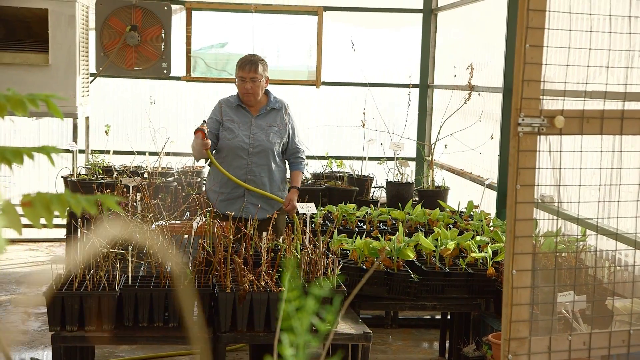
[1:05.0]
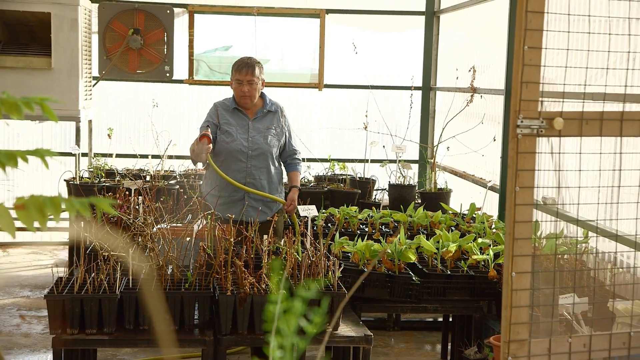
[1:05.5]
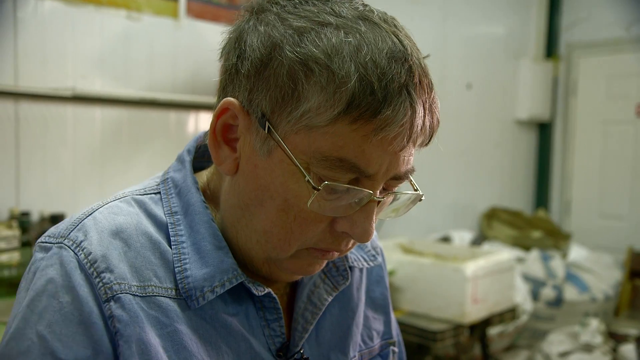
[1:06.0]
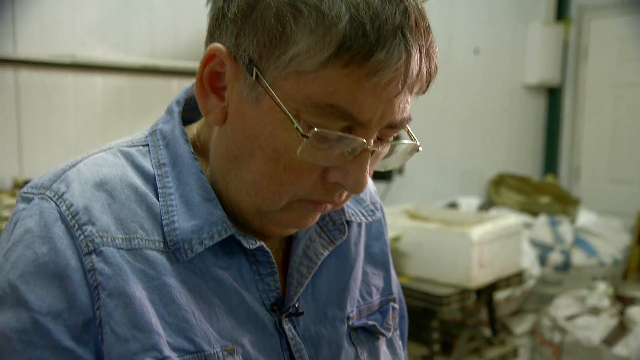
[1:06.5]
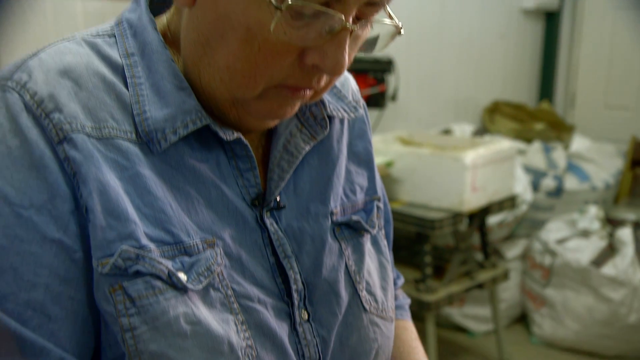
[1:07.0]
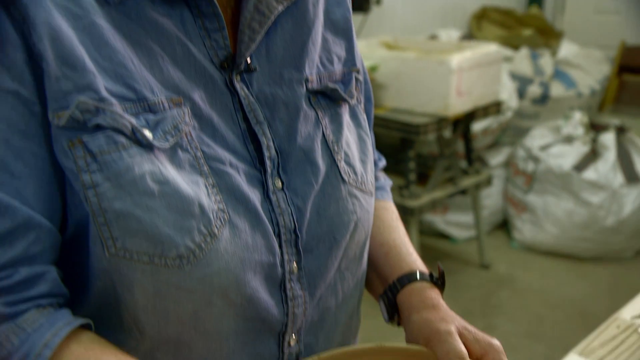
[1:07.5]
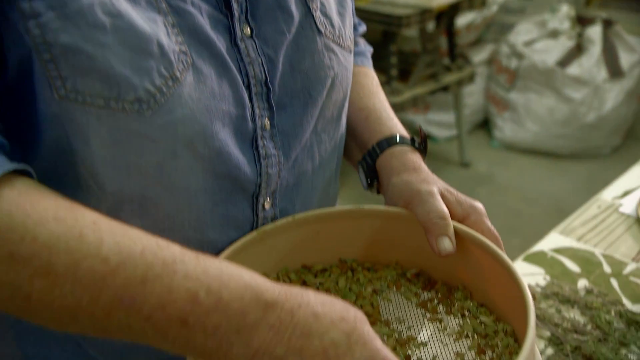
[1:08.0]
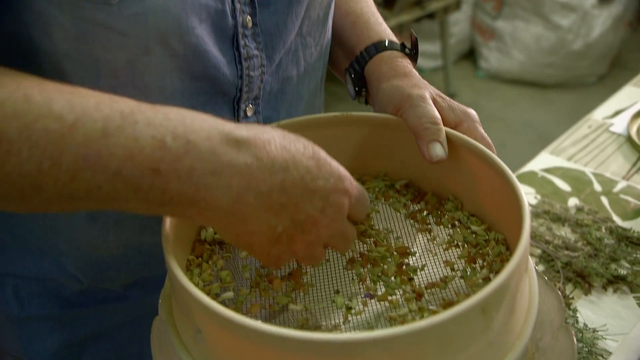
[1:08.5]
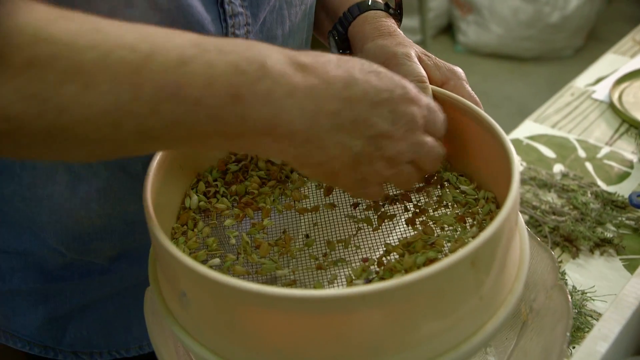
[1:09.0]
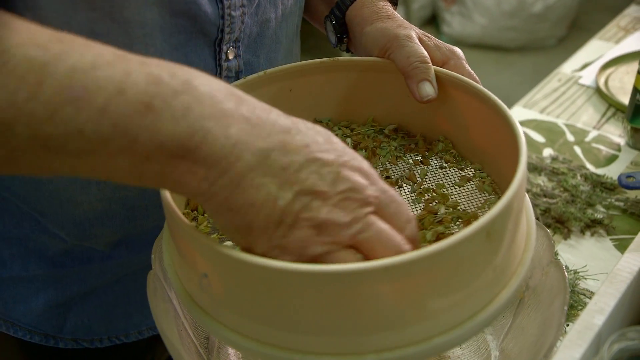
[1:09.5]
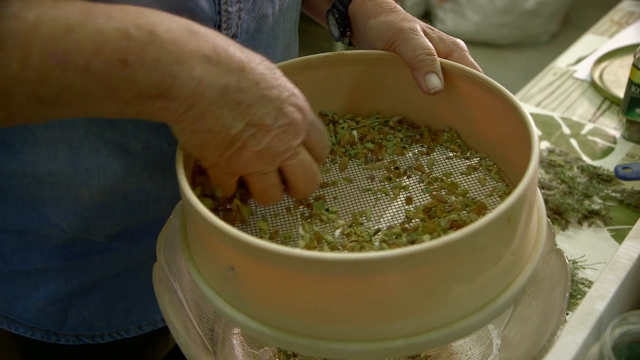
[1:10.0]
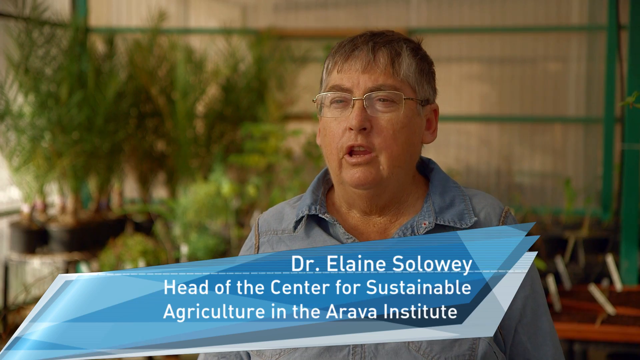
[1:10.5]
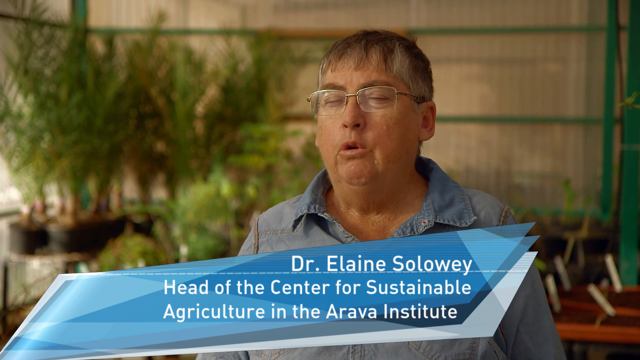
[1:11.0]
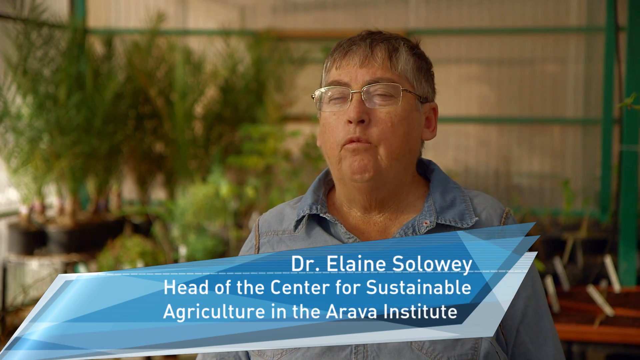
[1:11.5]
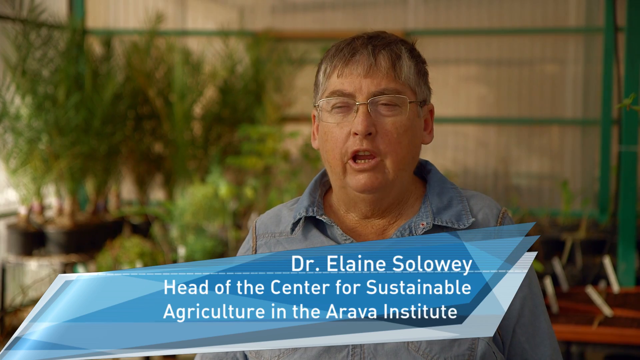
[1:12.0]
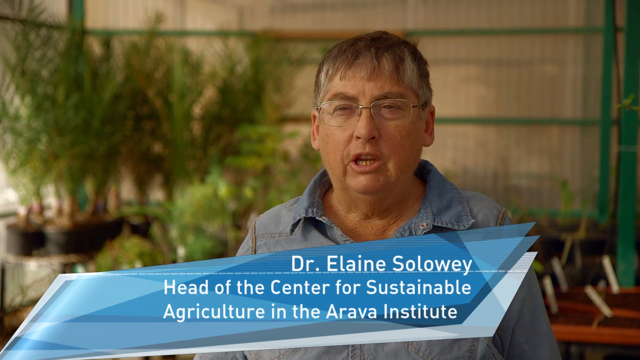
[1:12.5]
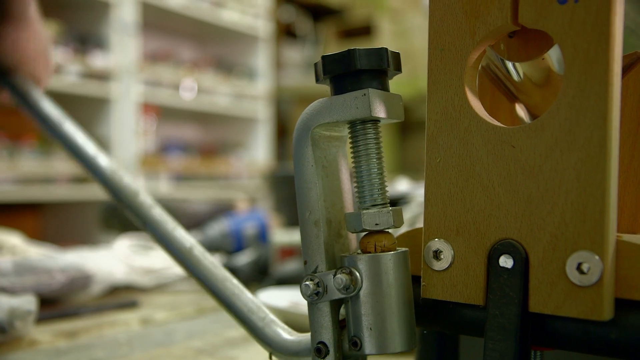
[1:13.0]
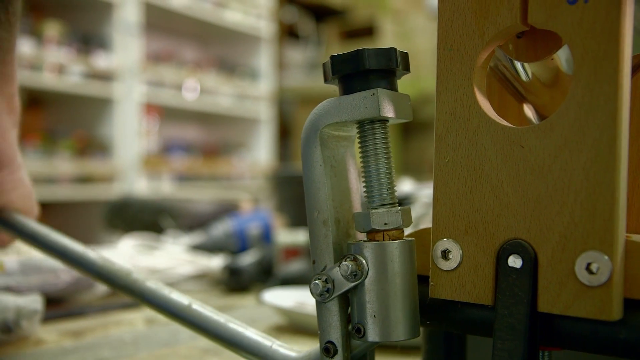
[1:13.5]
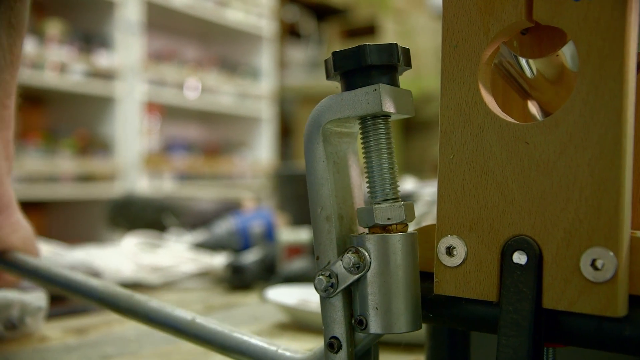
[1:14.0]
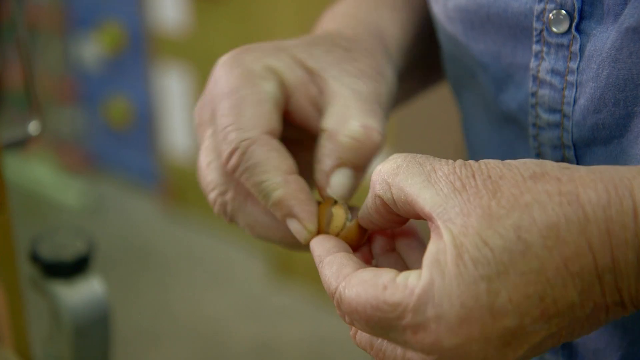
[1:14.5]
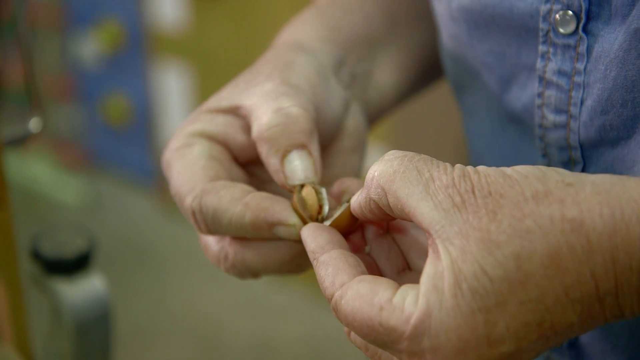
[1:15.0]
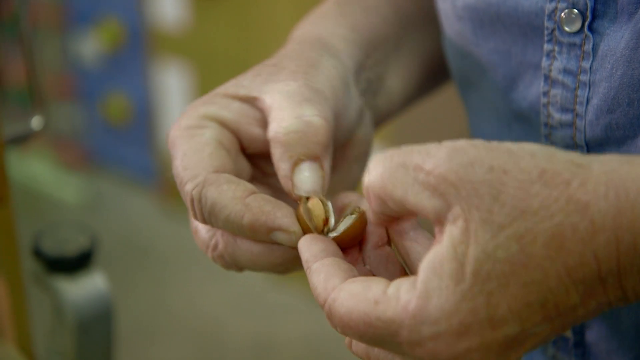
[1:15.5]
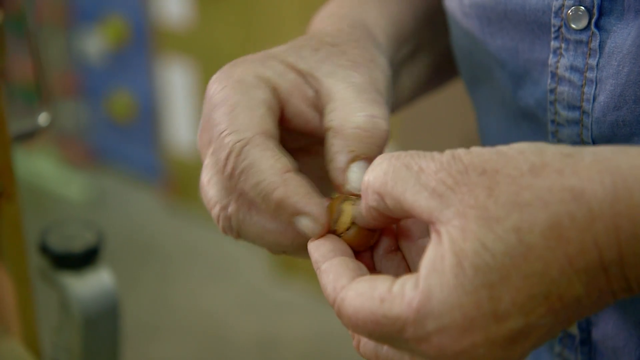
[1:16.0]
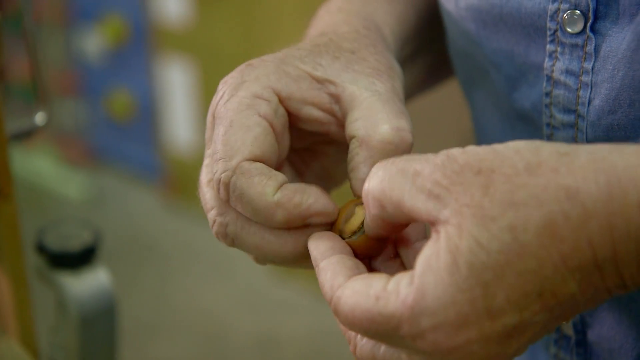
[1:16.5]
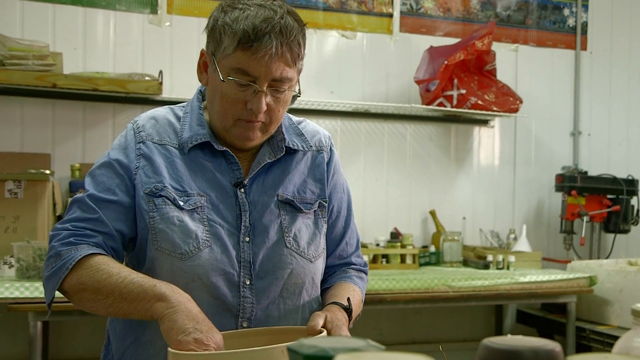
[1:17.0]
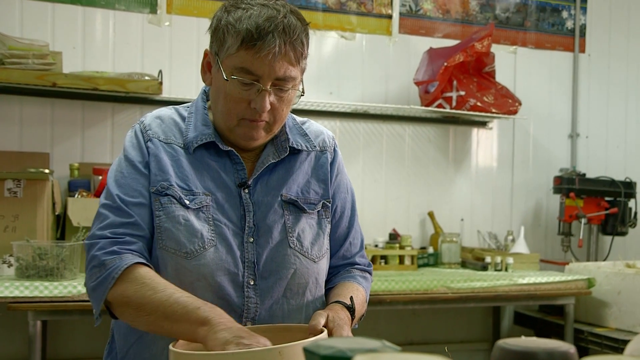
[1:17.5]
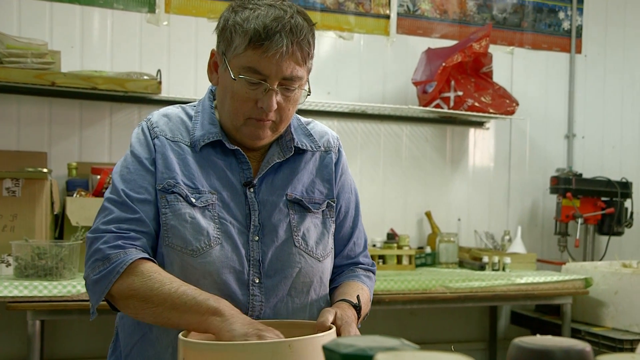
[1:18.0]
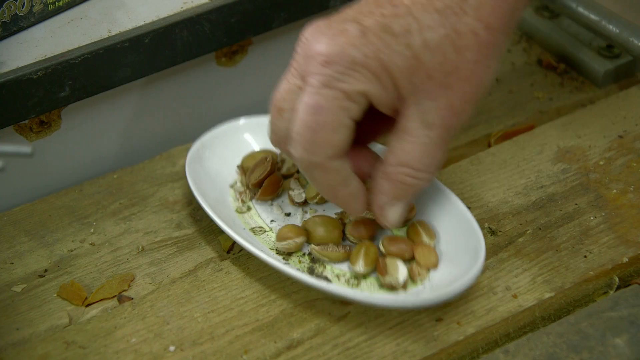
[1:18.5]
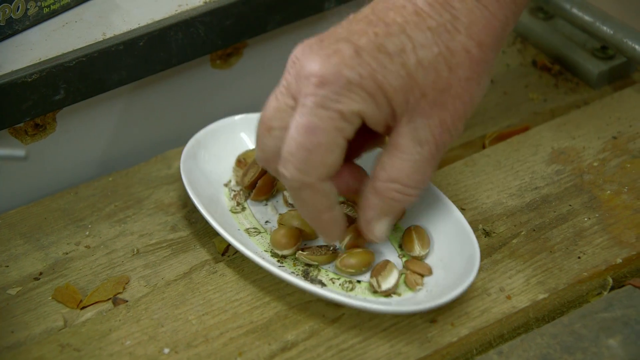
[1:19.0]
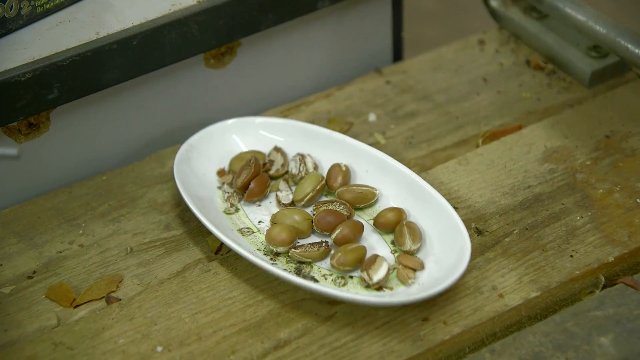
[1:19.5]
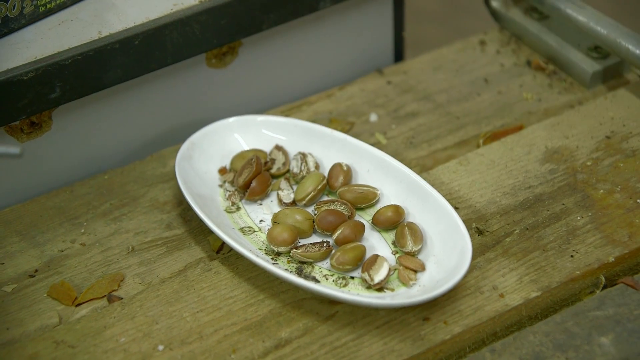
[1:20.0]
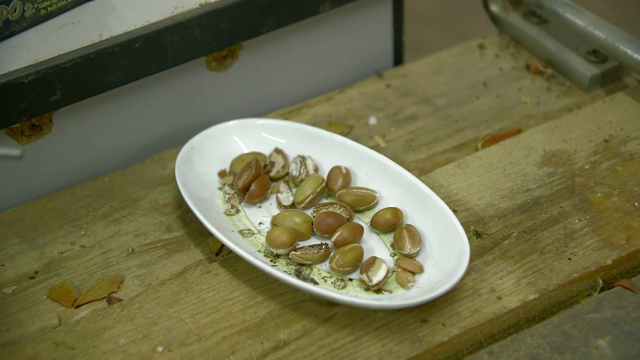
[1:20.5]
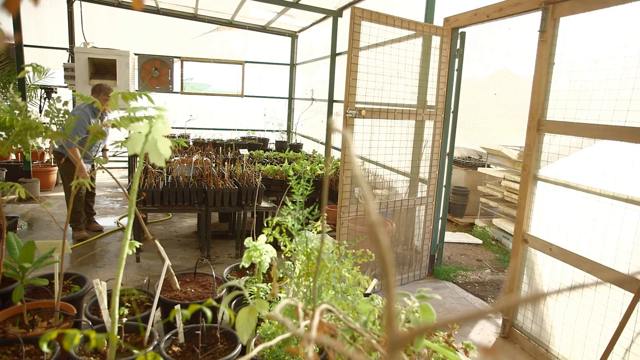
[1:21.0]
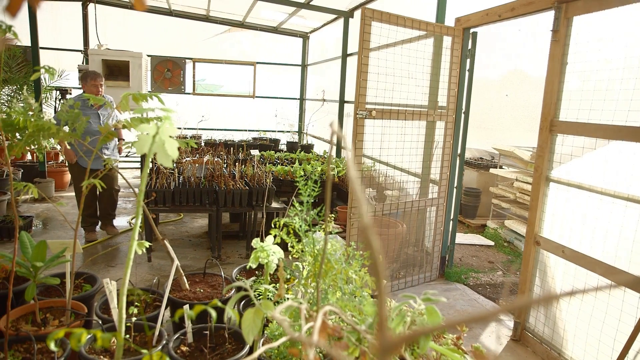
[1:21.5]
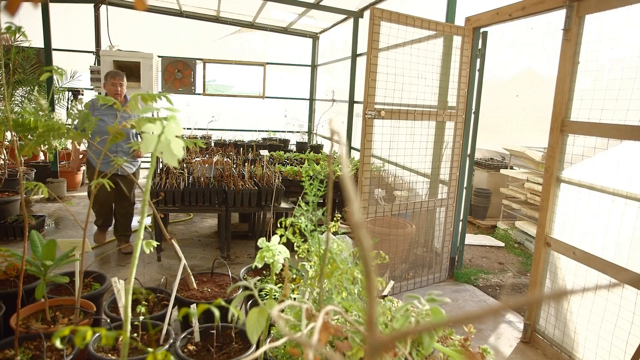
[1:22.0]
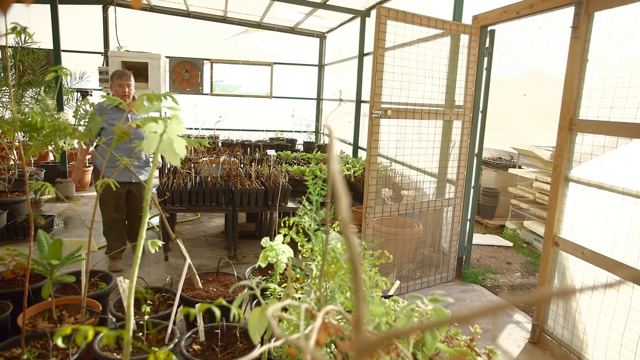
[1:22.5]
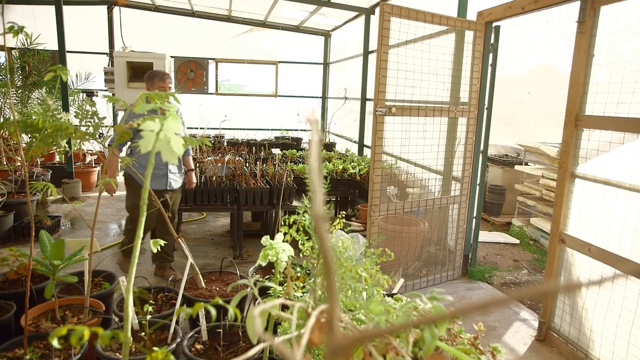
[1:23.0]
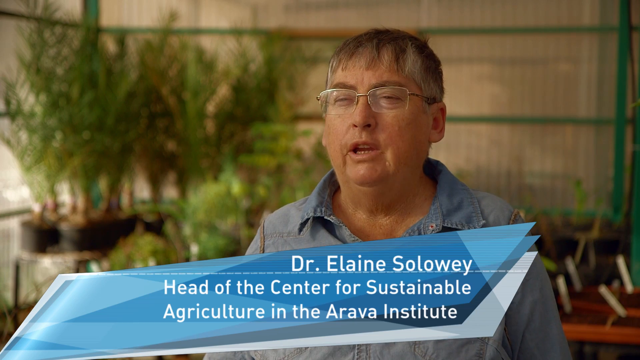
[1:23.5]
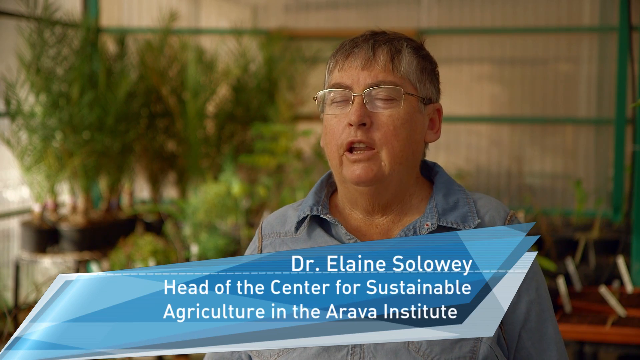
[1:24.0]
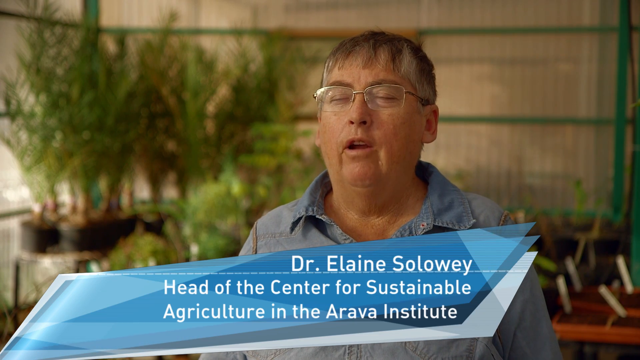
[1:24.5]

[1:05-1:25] A man, a doctor, sifts through seeds with Dr. Elaine Soloway. He crushes one open to get the seed out of the nut, using something like a colander to separate them. He has a big greenhouse, and he waters his plants and goes about daily plant care. A machine with a screw bolt is used to crush open the nuts to get to the seed. The seeds are apparently from the Judean date palm, and this doctor is apparently helping to bring the tree back to life.